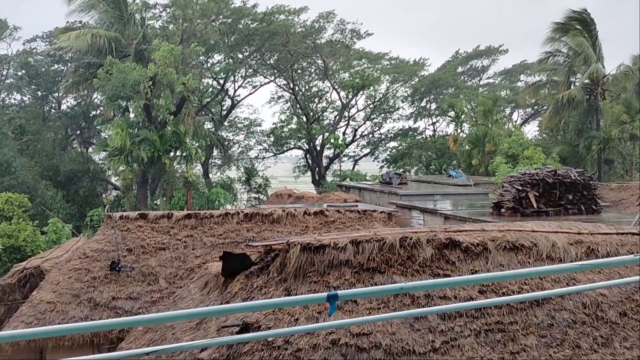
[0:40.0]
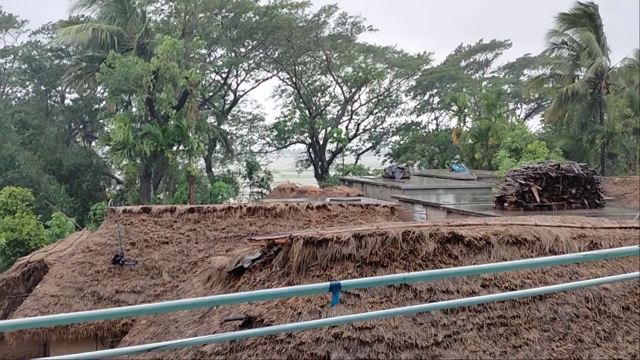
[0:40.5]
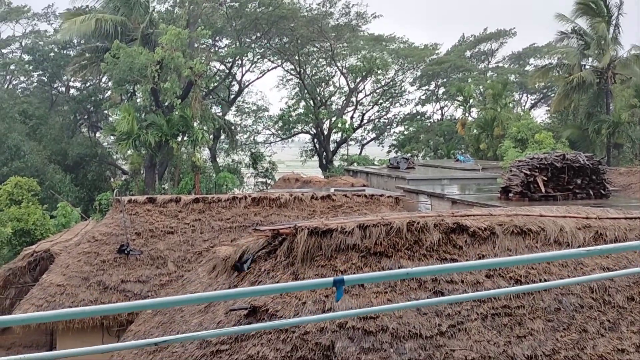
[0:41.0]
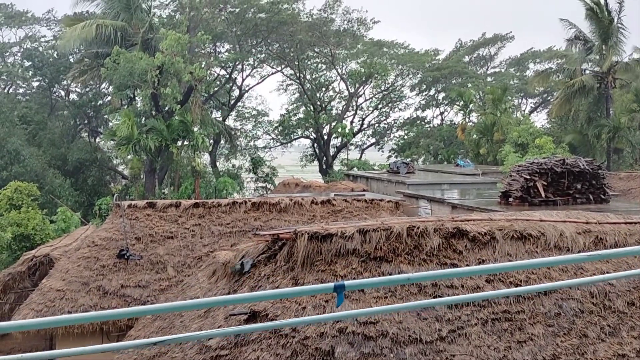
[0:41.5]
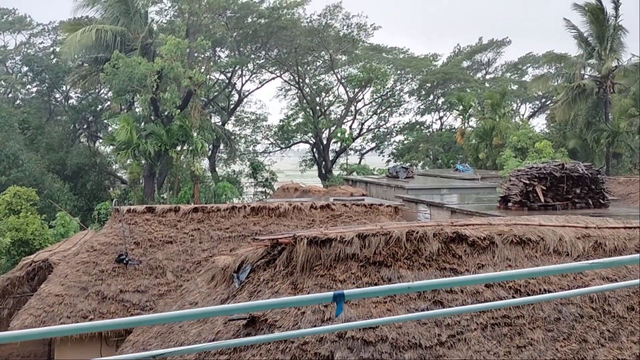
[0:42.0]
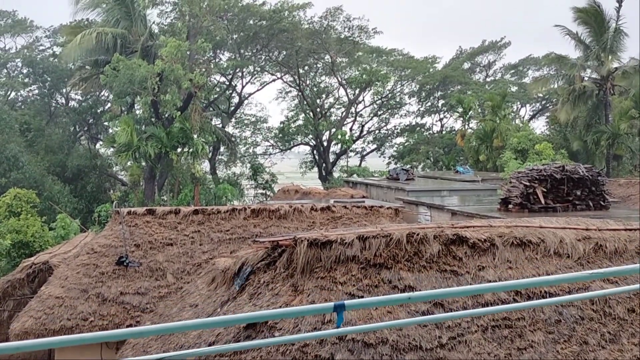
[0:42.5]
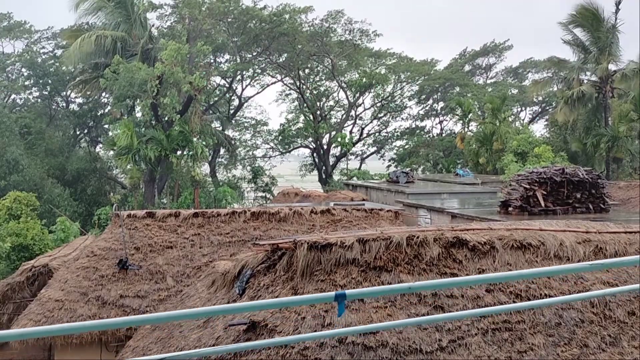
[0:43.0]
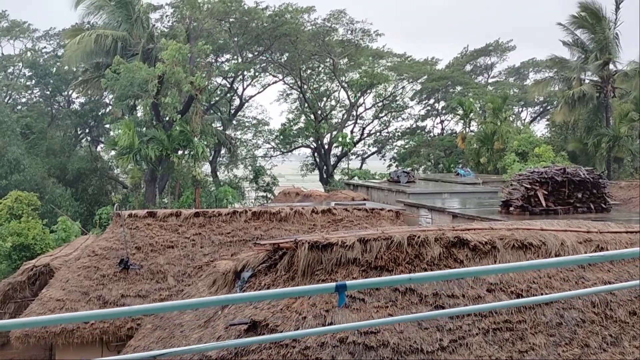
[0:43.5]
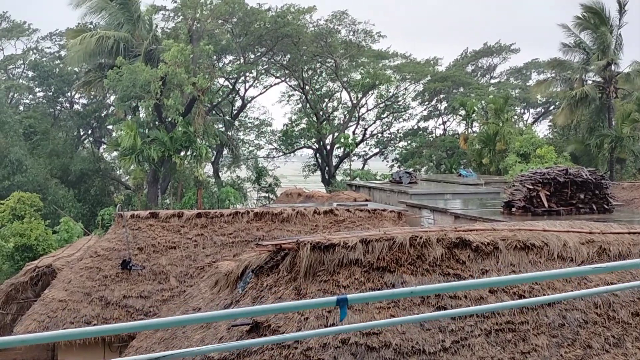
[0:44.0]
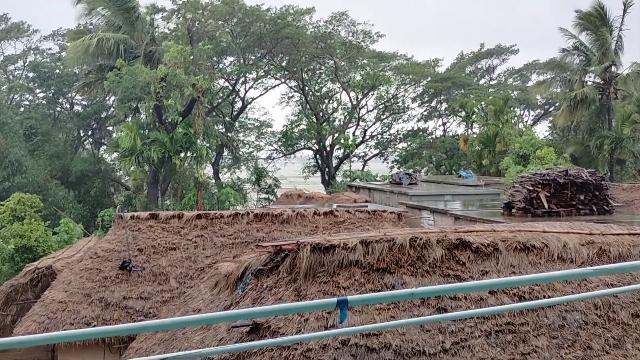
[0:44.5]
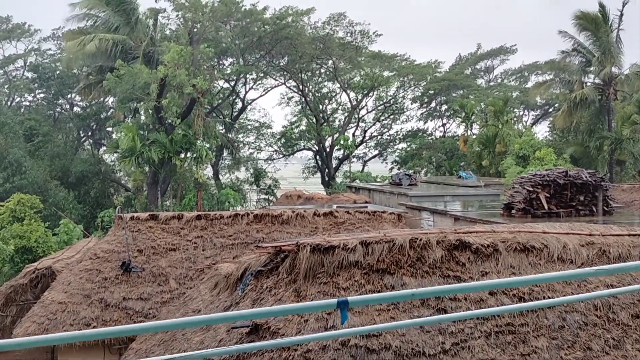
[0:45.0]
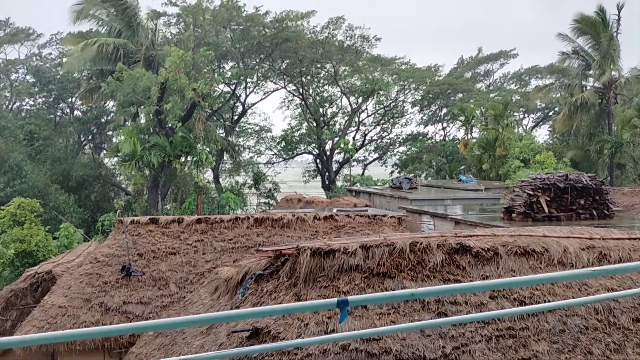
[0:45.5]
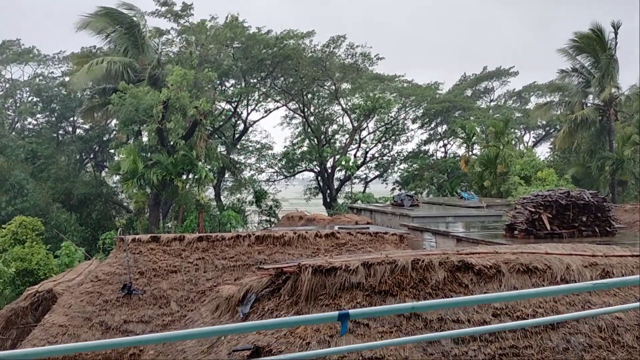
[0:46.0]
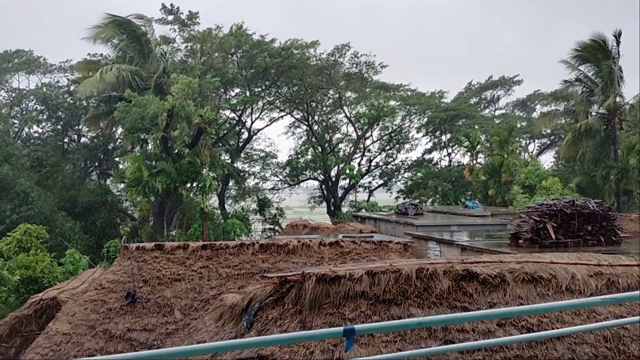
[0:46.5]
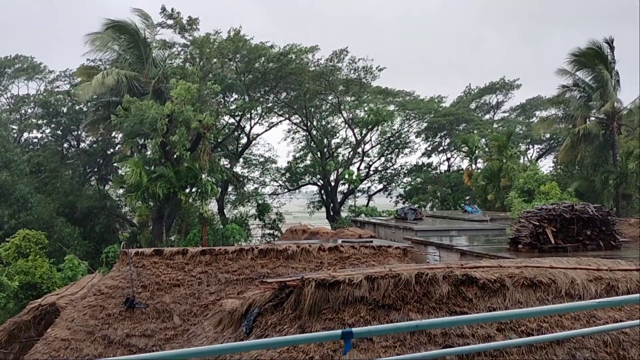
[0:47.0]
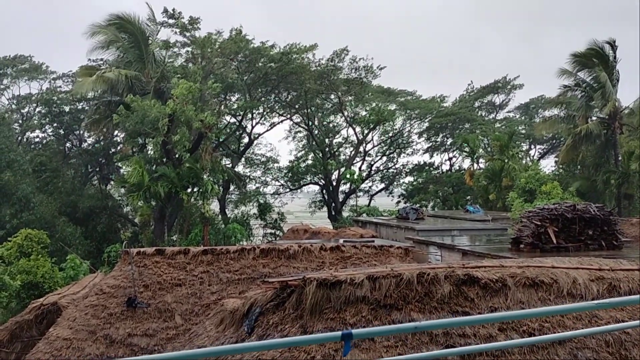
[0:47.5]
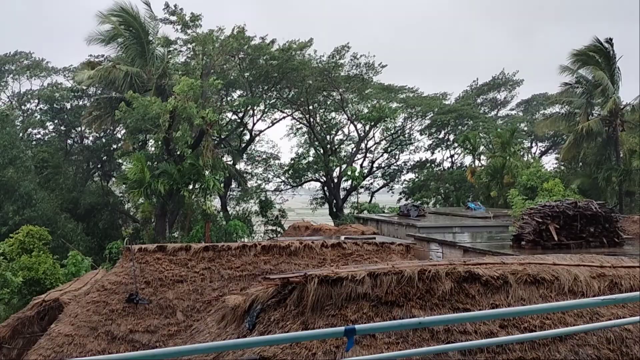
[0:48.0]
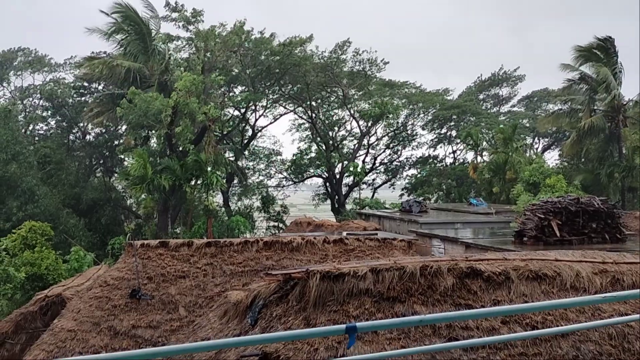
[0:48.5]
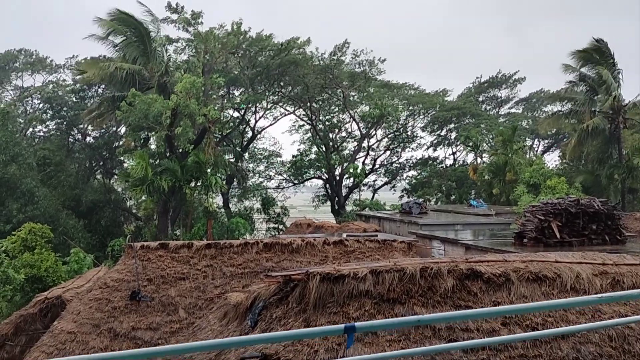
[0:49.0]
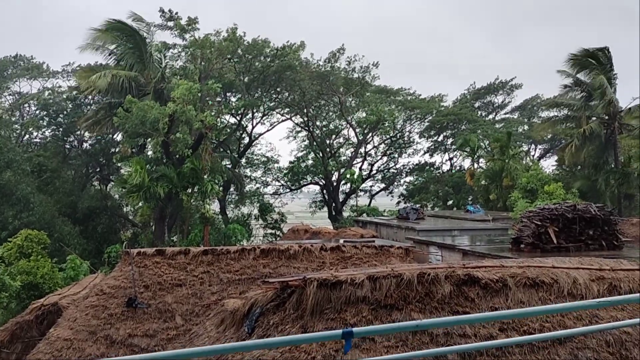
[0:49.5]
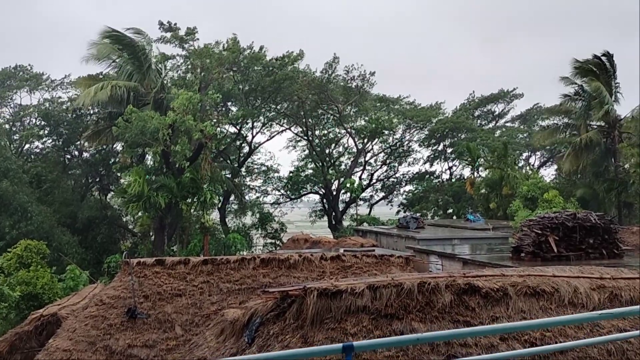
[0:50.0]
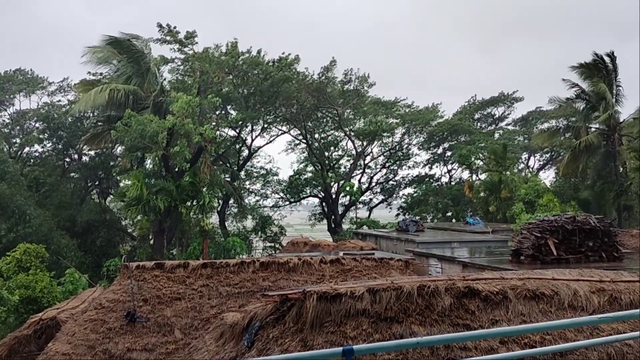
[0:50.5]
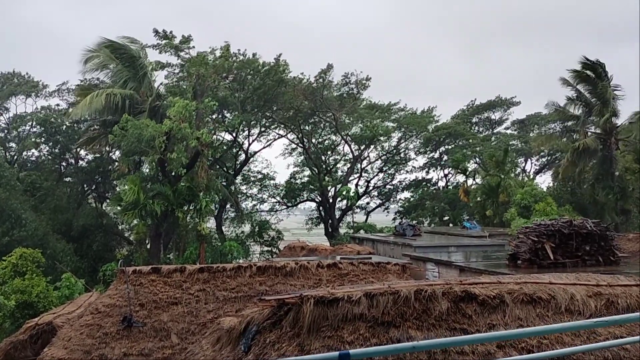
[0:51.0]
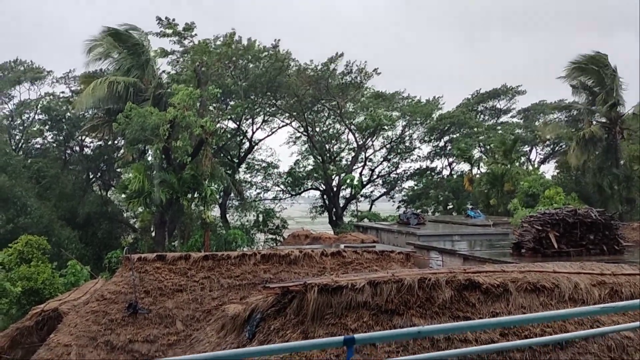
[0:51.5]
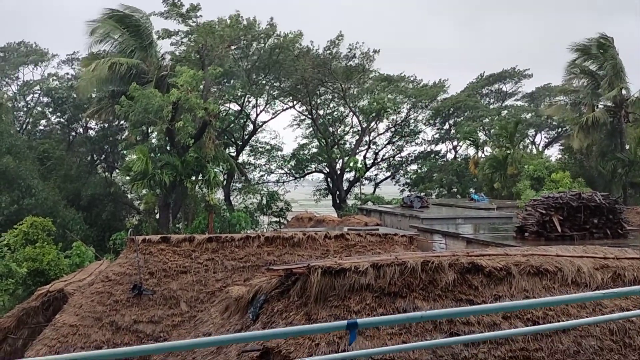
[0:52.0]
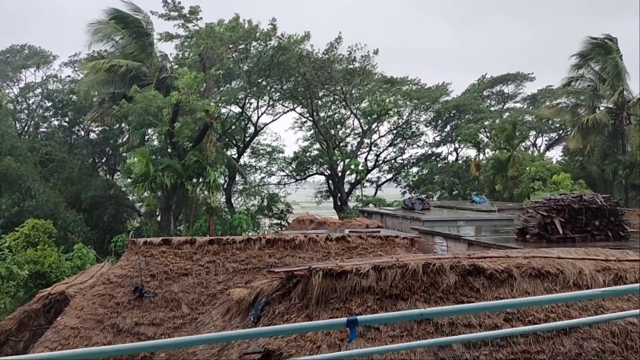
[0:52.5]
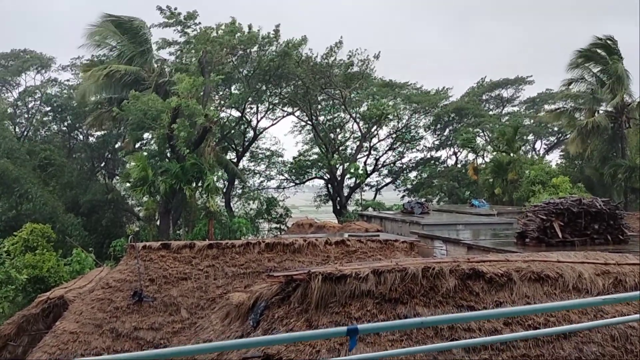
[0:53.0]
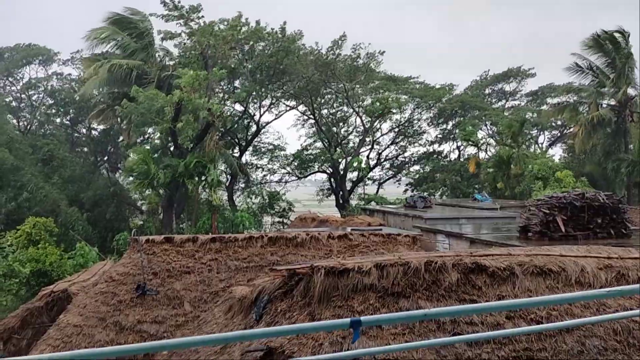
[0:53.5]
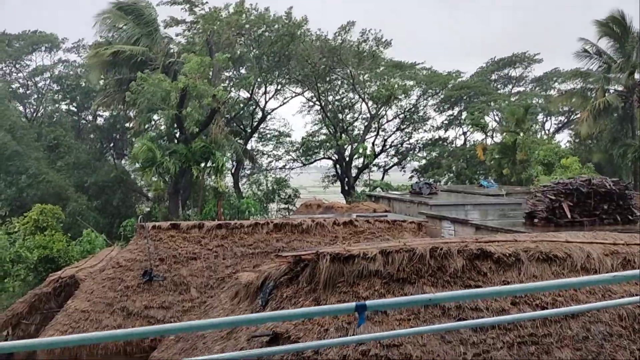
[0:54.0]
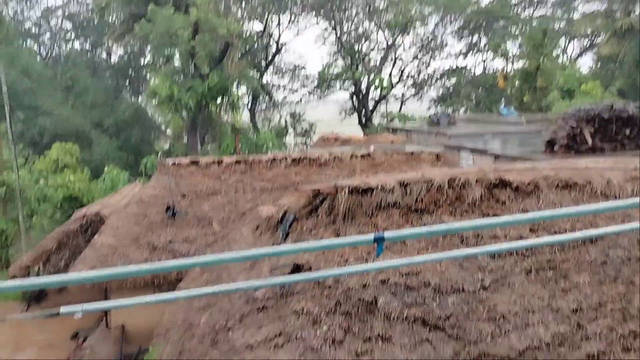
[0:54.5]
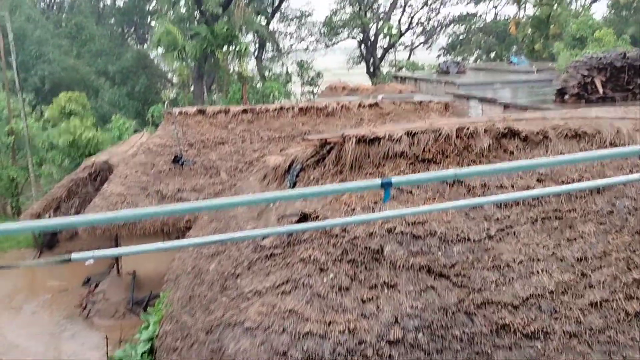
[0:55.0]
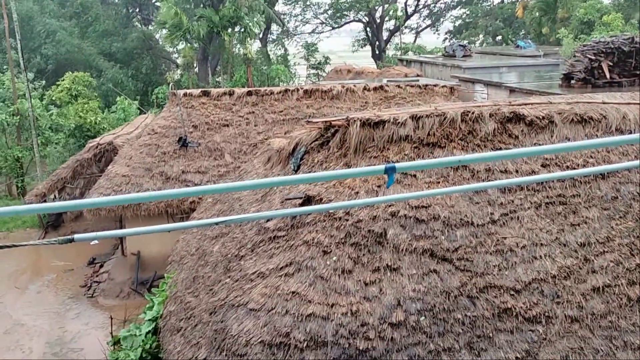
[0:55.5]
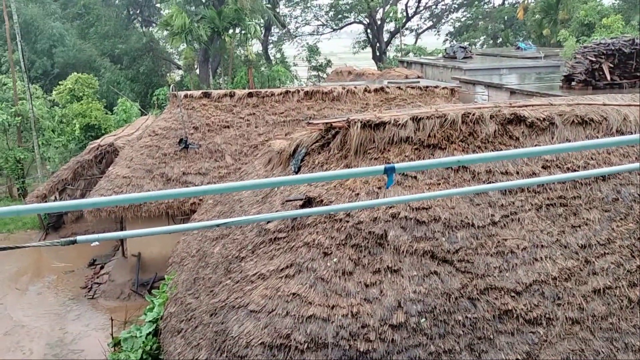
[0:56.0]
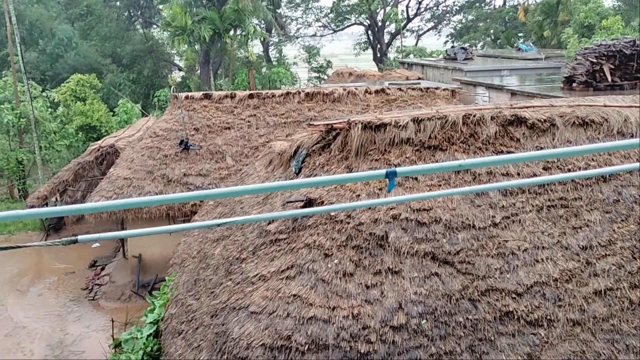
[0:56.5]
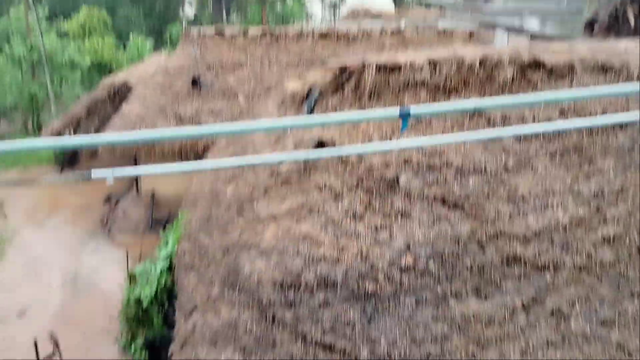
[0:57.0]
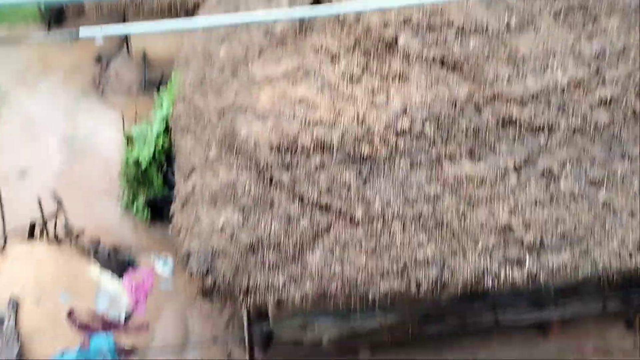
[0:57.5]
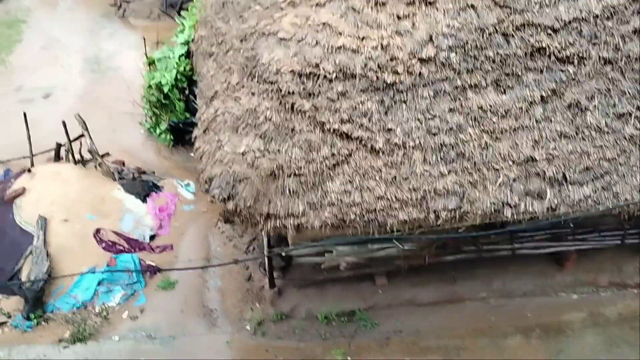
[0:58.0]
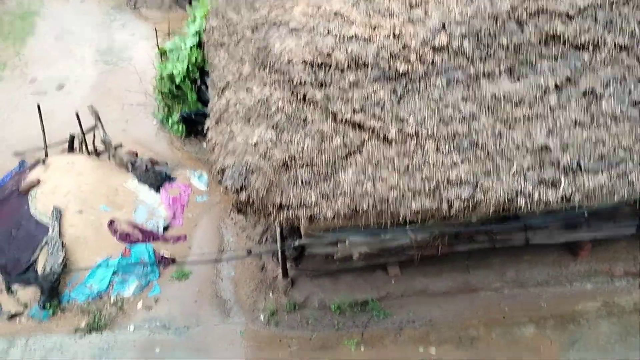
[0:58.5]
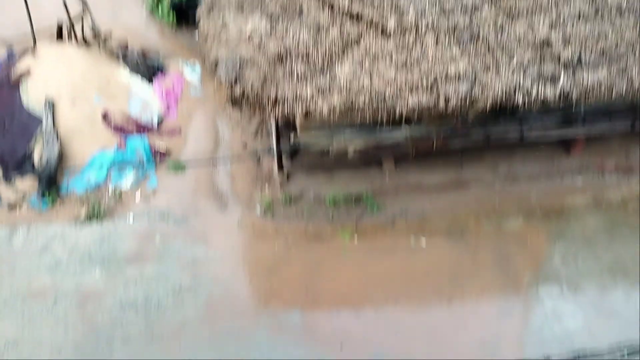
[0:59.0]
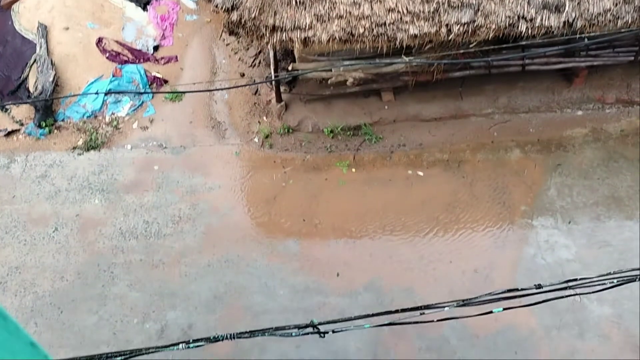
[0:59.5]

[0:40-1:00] There seem to be one or maybe two garments on top of the roofs, blowing a little; they could be flags, are barely visible, and at times look like they could be a bird with its wings. The camera pans down to show clothing on the ground as if it fell off a line, in different colors including light blue, pink and purple. There is a lot of water on the ground, and it looks as though the clothing might have been blown down into the muddy water and stayed there, though it is hard to tell. It looks like flooding down there, though not intense flooding.